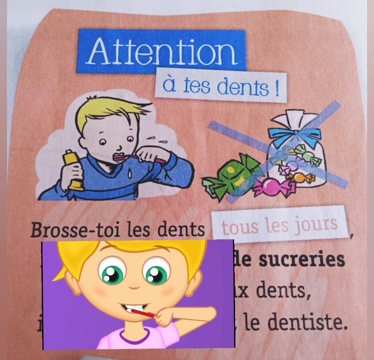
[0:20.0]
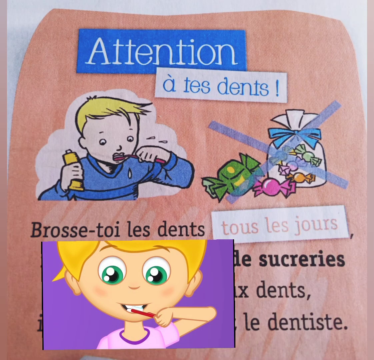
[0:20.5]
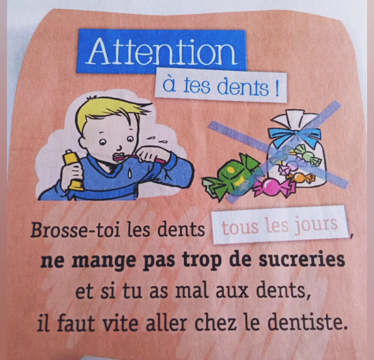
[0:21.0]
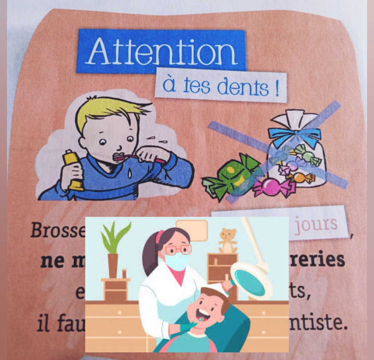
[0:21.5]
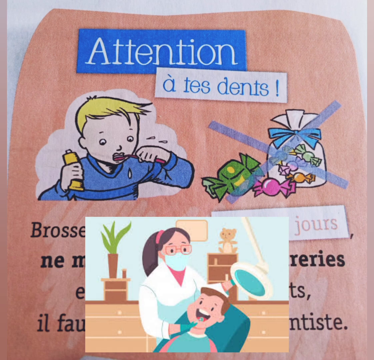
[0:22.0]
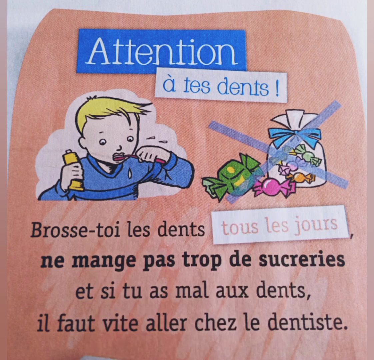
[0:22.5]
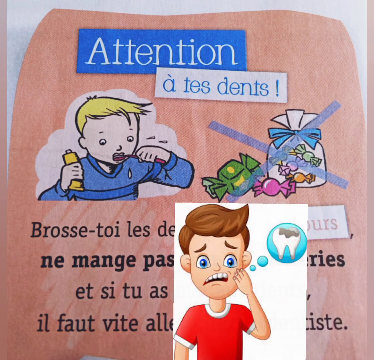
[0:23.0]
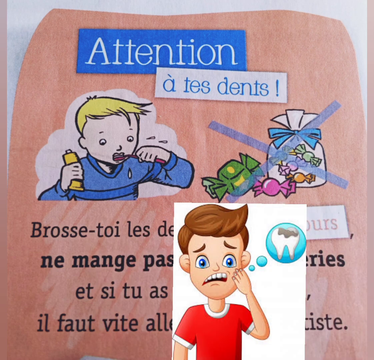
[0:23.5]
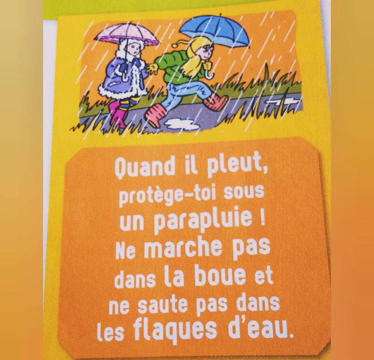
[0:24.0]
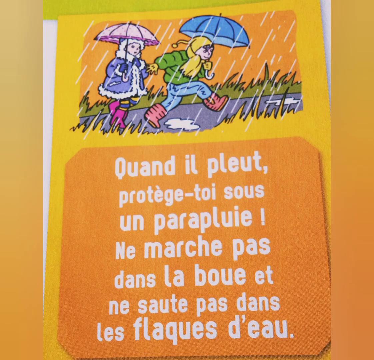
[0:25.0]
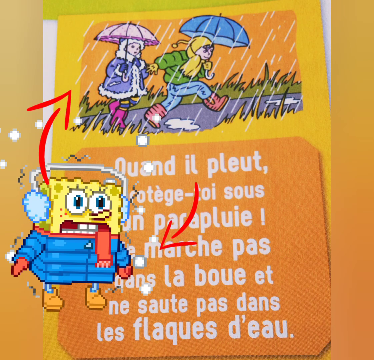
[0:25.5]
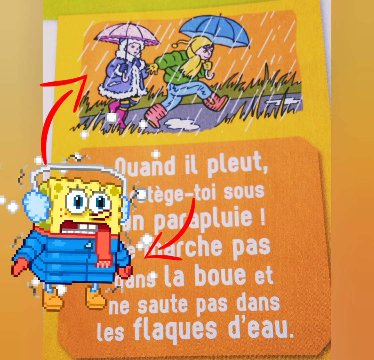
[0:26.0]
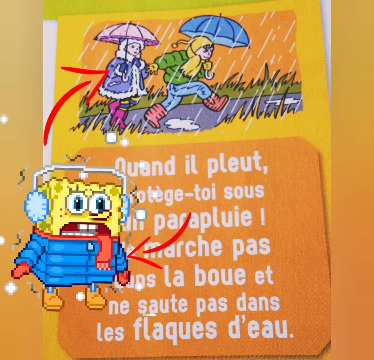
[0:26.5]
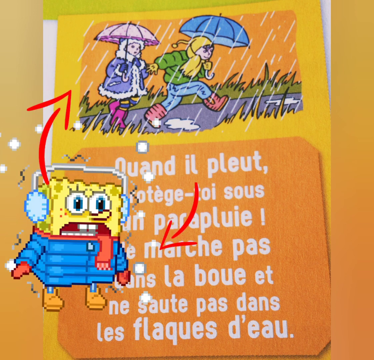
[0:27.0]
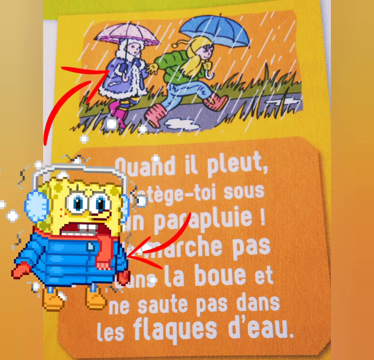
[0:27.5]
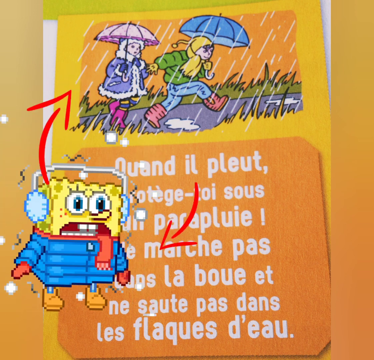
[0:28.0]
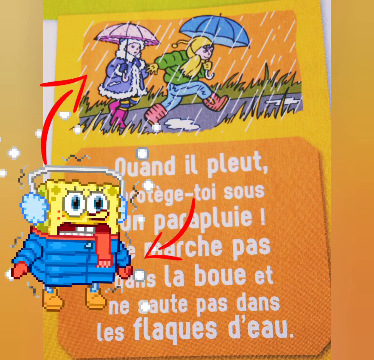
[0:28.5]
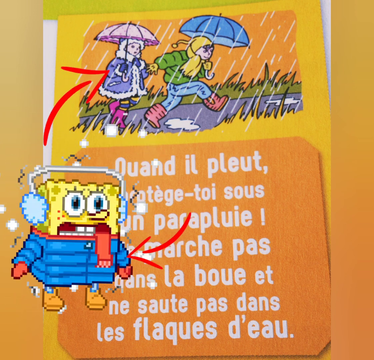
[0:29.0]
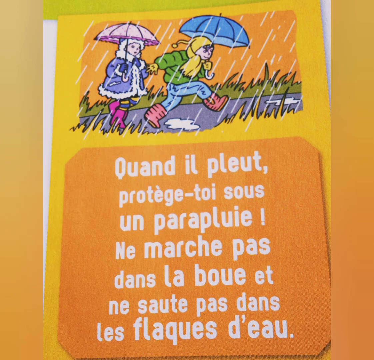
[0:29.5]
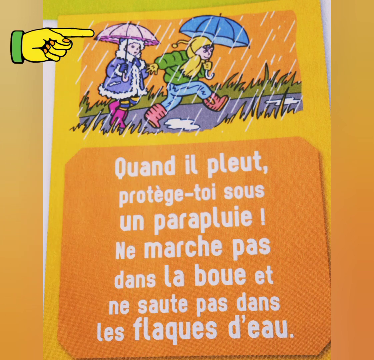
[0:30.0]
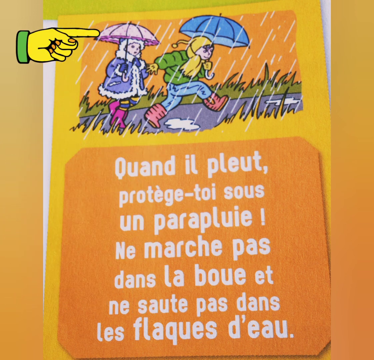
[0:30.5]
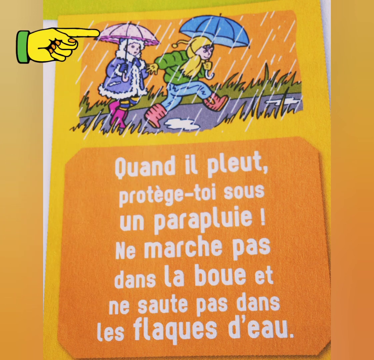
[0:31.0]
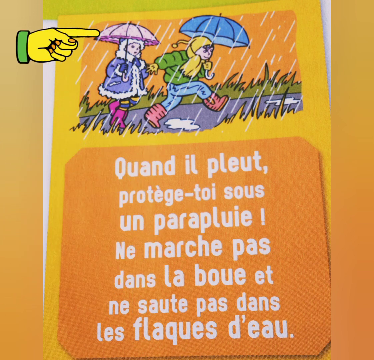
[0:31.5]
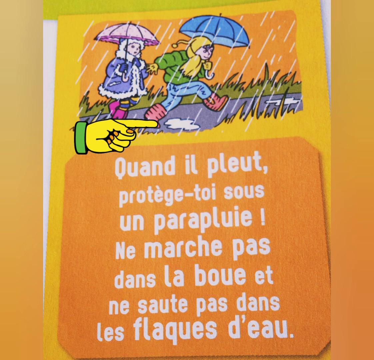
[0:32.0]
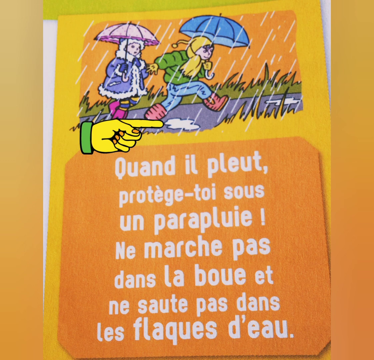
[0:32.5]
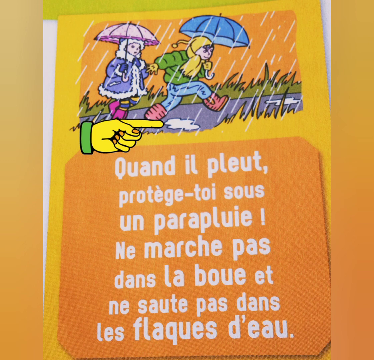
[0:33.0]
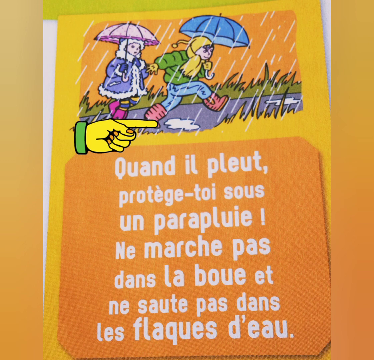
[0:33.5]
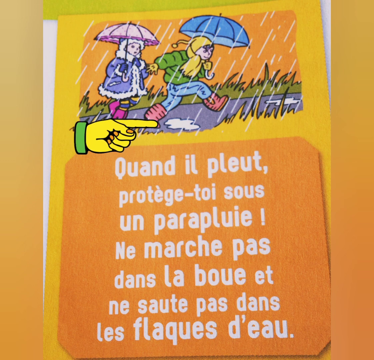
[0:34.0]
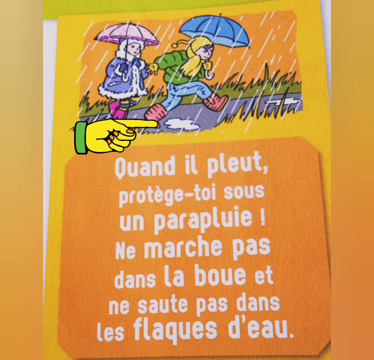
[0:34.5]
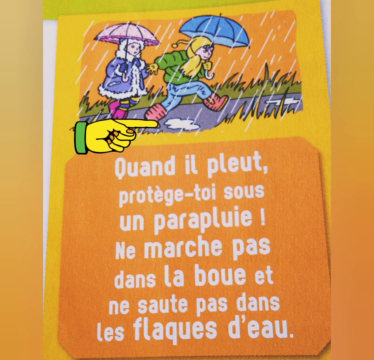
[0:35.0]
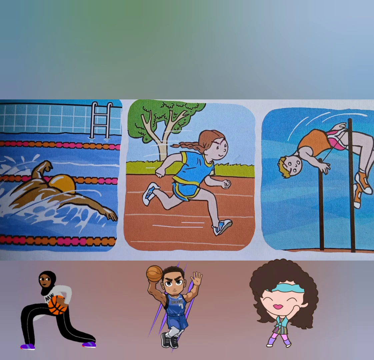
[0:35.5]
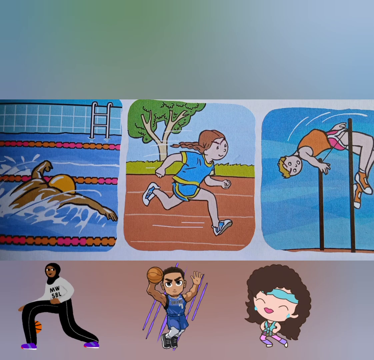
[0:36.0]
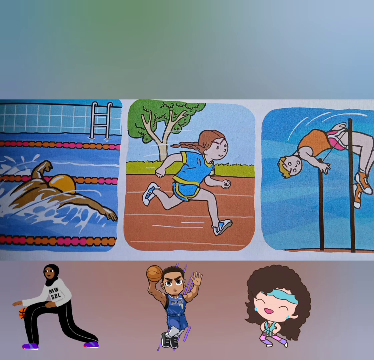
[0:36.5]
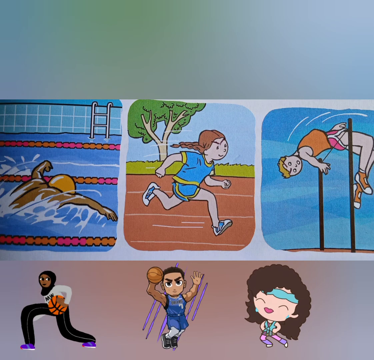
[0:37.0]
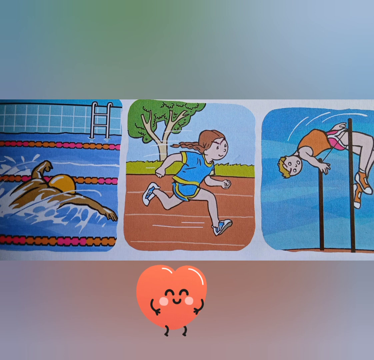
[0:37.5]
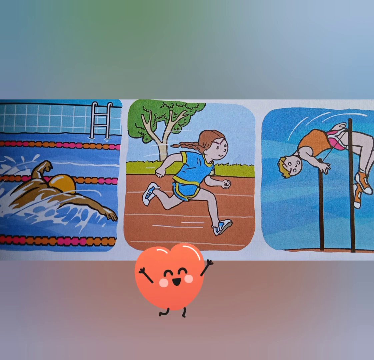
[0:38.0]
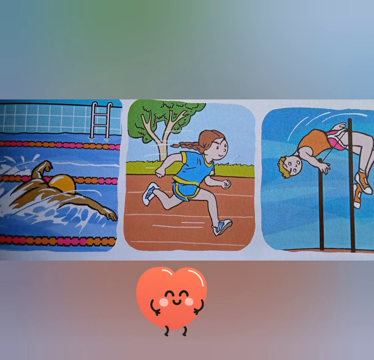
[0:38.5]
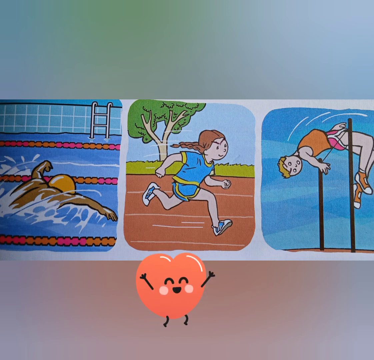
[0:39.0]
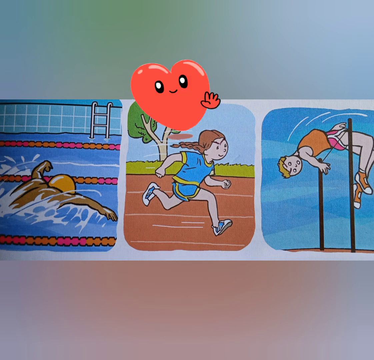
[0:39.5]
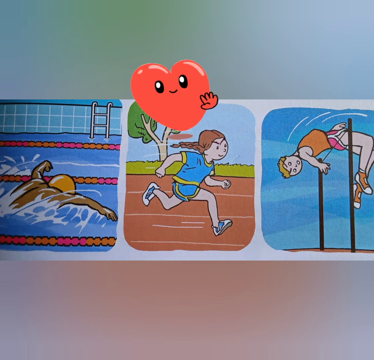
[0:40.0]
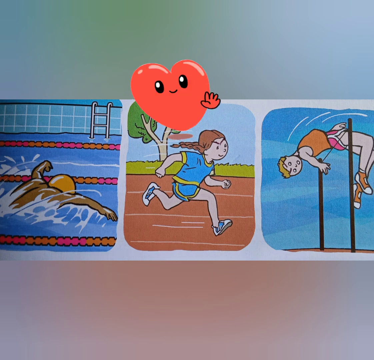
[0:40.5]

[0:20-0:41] A close-up shows another section of the children's French book. At the beginning, a boy is brushing his teeth, and a candy has a cross through it, promoting good oral hygiene for children. Also at the beginning, a cartoon overlay shows a woman dentist looking at or cleaning a boy's teeth in her office. A transition leads to a boy holding his head with a toothache. Then SpongeBob appears getting cold and shaking, and another blurb is about making sure to have an umbrella in the rain. After SpongeBob shakes from the cold, an overlay of a hand points to the rain in the image and then to a puddle. The final part shows the sports blurbs with different icons, including a girl playing basketball, along with a jumping heart.